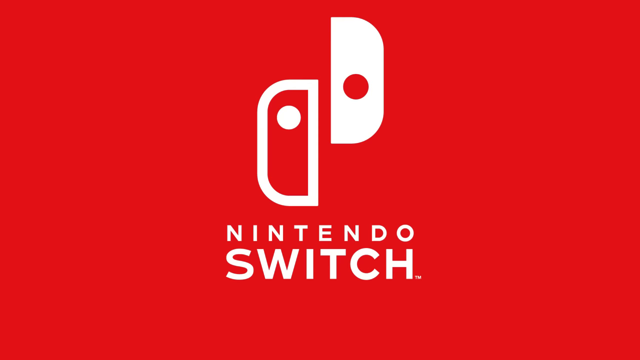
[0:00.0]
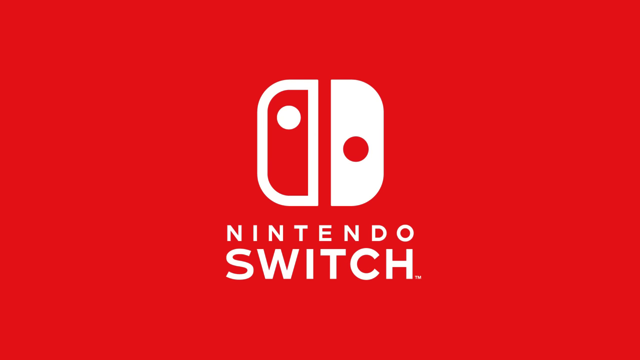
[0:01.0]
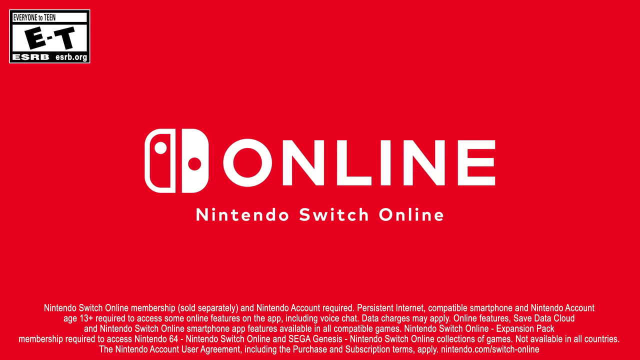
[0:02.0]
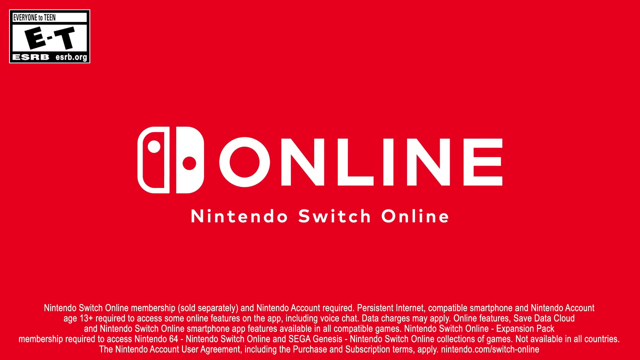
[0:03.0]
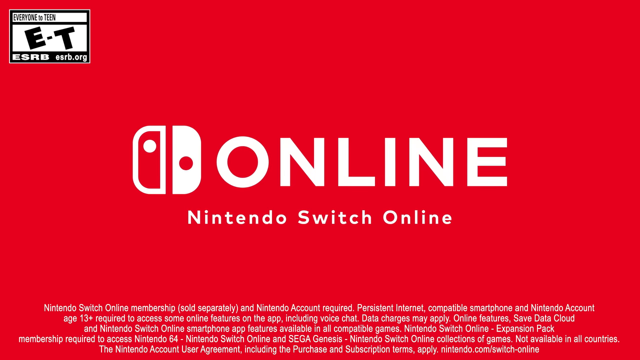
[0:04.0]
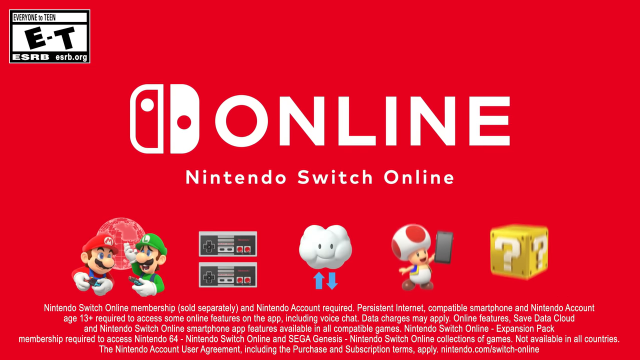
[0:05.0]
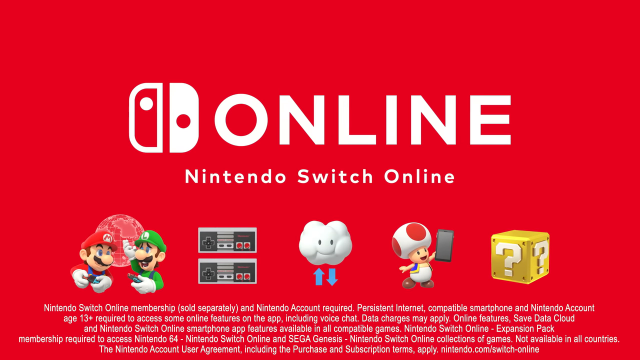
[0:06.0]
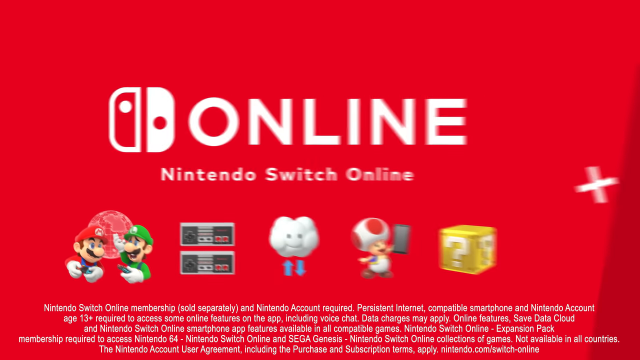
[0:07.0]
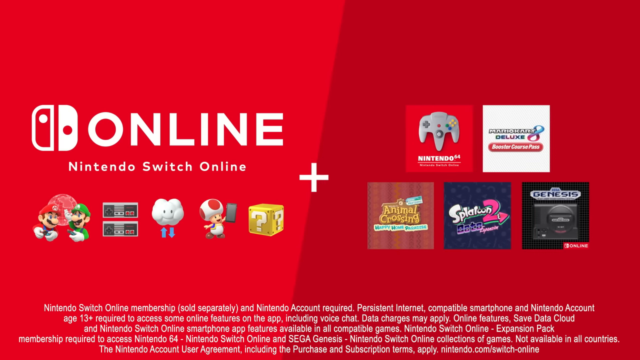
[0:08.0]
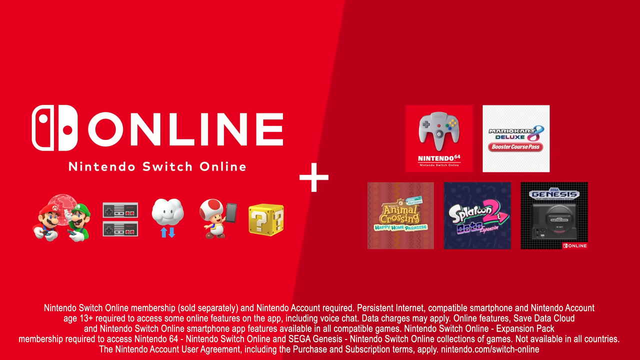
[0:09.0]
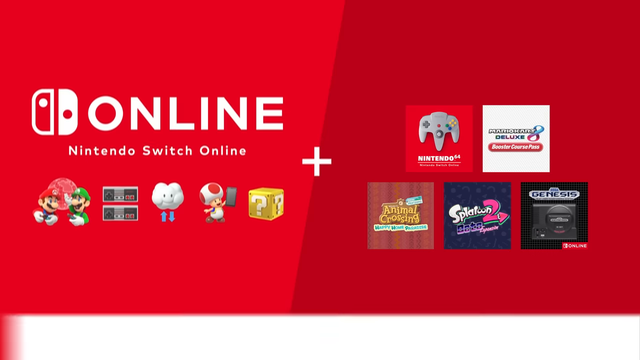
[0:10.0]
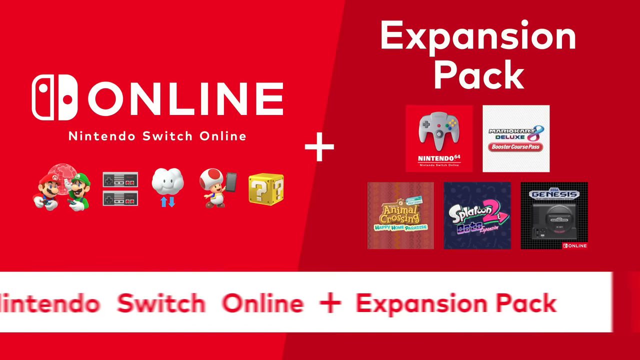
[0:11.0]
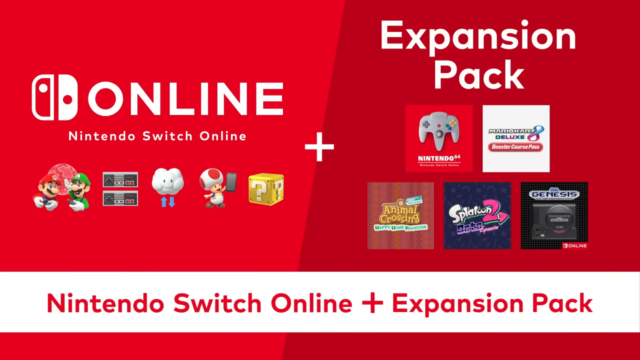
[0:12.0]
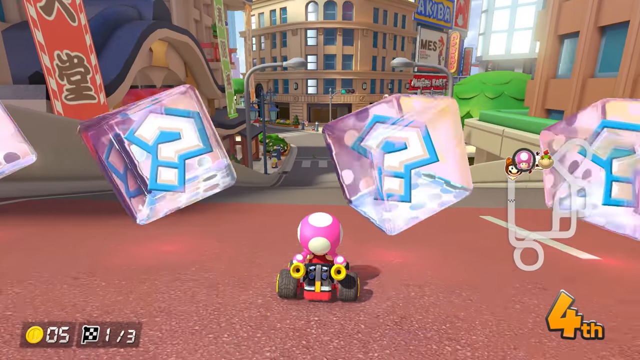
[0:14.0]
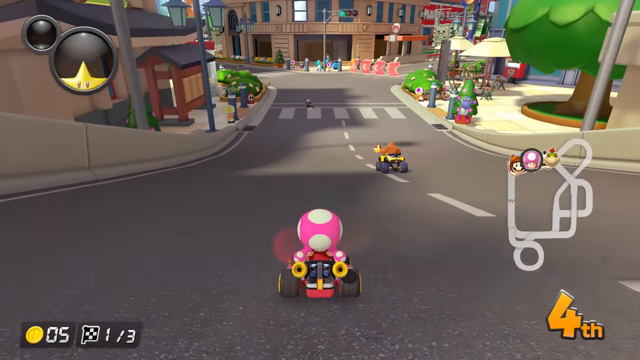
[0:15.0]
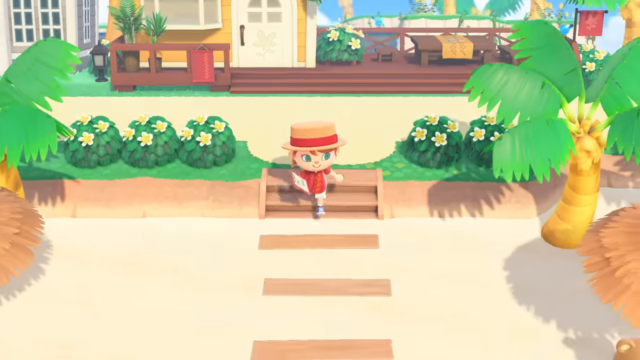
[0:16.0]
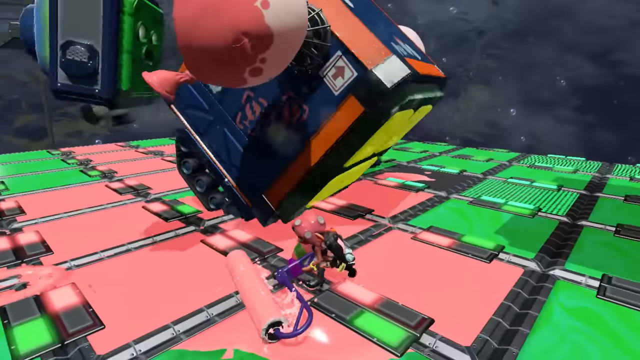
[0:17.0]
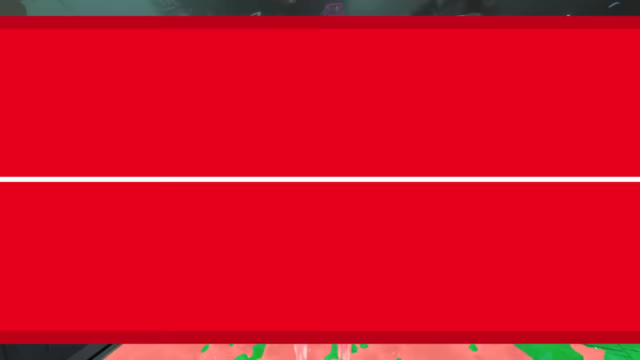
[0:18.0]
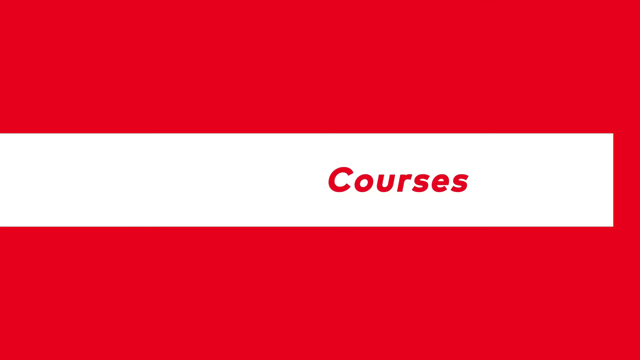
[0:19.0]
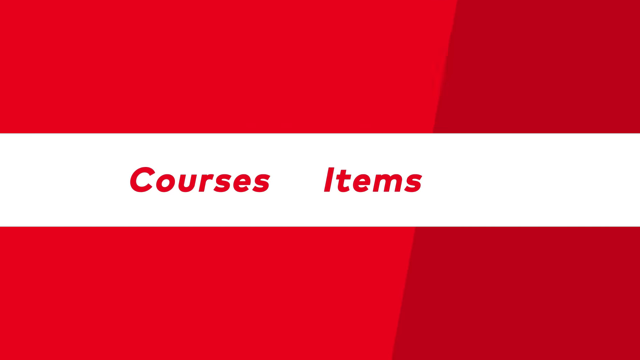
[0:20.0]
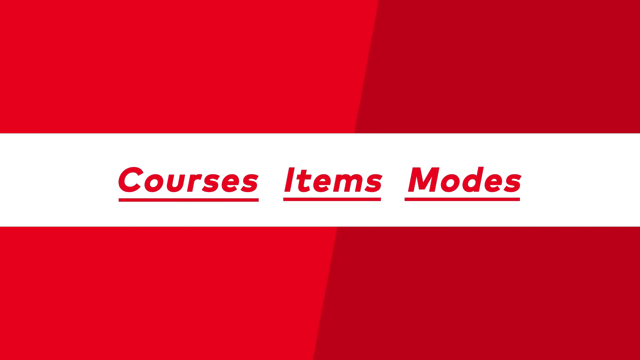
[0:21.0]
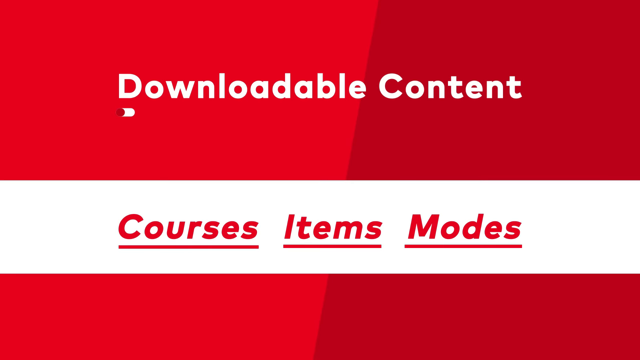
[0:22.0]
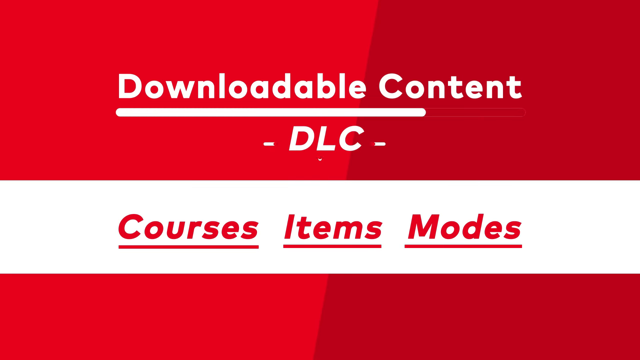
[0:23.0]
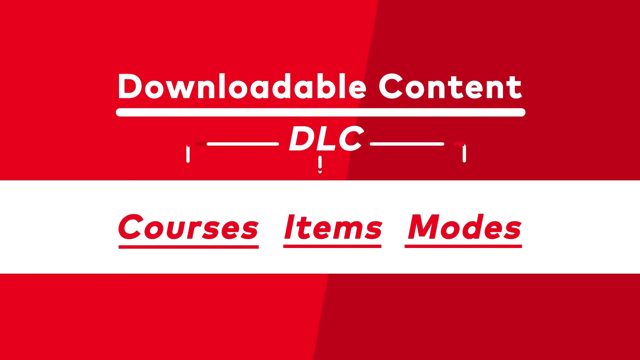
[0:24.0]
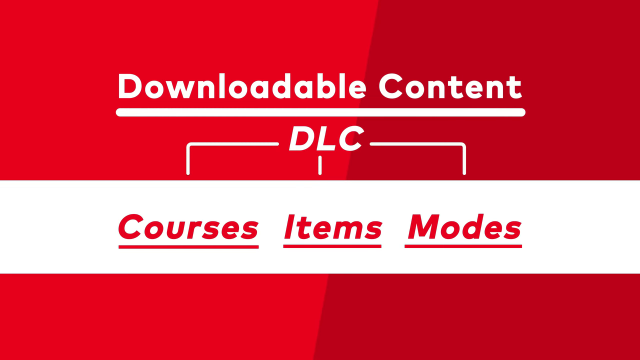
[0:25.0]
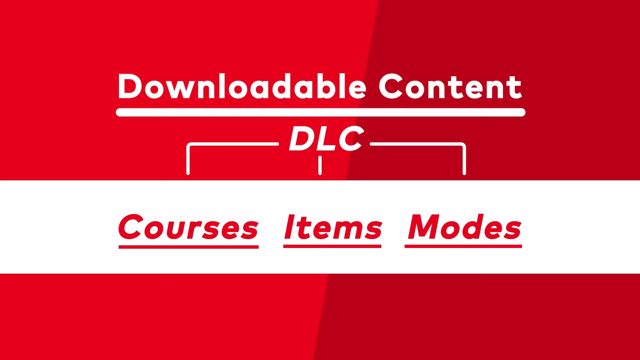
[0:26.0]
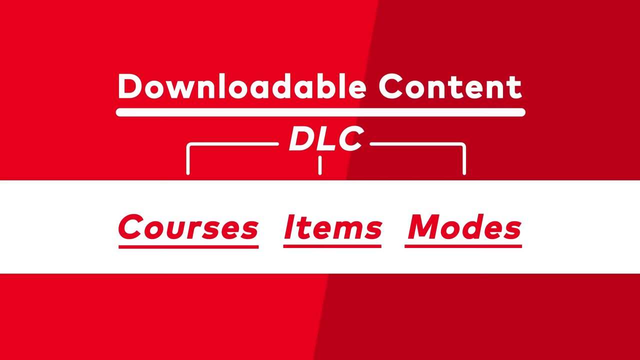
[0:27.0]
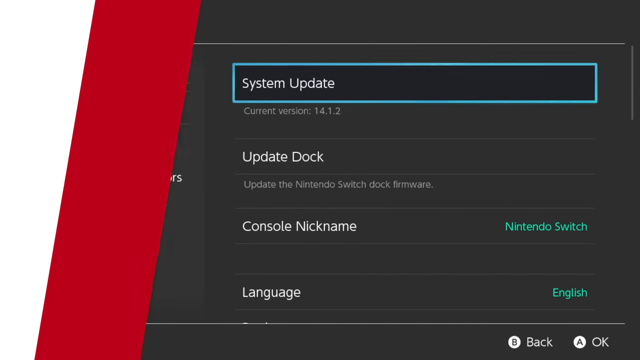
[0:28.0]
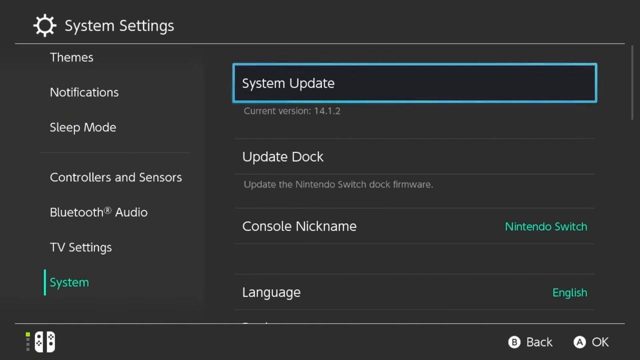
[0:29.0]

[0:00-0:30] The video is for Nintendo Switch. The background is bright red, and "Nintendo Switch" appears in red or white. Text reads "Nintendo Switch online." Characters pop up at the bottom, Mario and Luigi. The original Nintendo controllers pop up, followed by a cloud with blue arrows pointing up and down, and a mushroom character holding a tablet in a gold box with a question mark. The Nintendo 64, Animal Crossing, Sega Genesis, and a brightly colored game follow. Text reads "Nintendo Switch Online Plus expansion pack." Mario Kart is then shown being played, with characters driving through a city. Other games pop up in the different play areas, text reads "downloadable content, courses," and system settings pop up. The video cycles back to the red screen that says "Nintendo Switch."